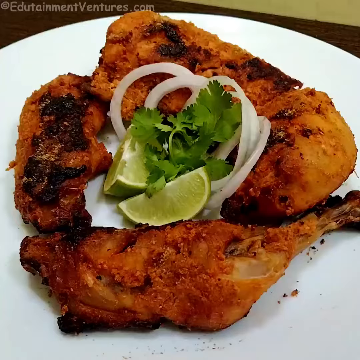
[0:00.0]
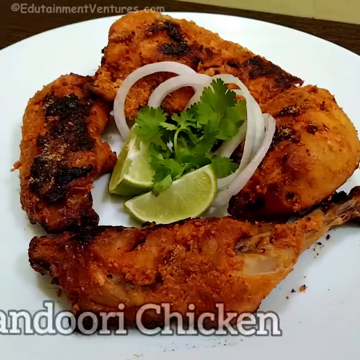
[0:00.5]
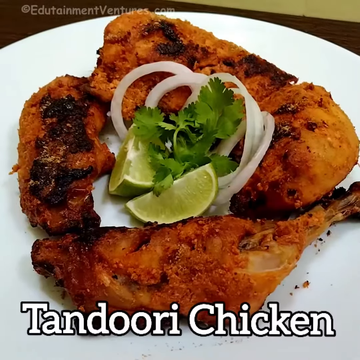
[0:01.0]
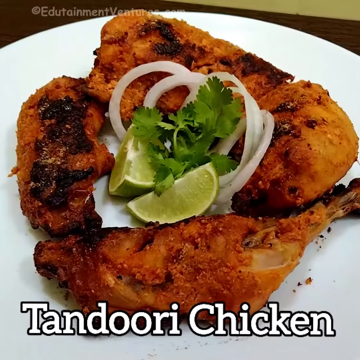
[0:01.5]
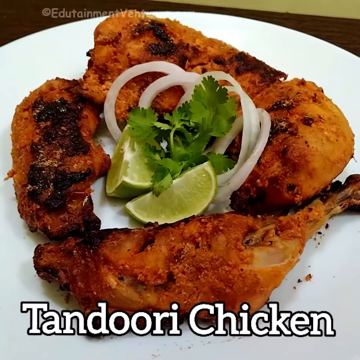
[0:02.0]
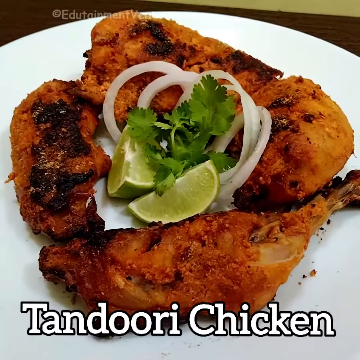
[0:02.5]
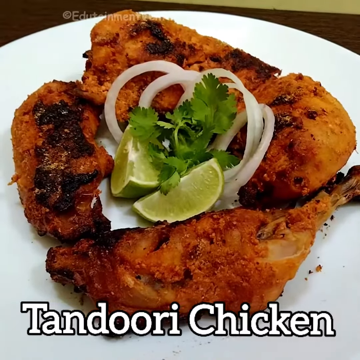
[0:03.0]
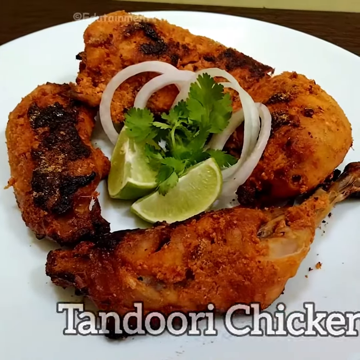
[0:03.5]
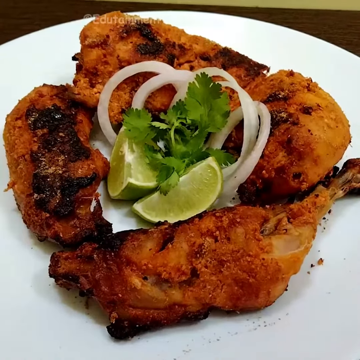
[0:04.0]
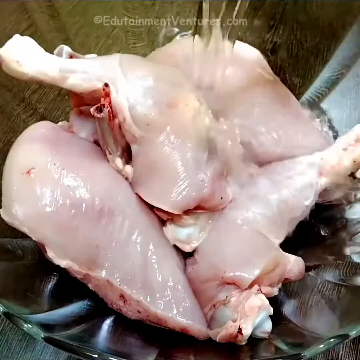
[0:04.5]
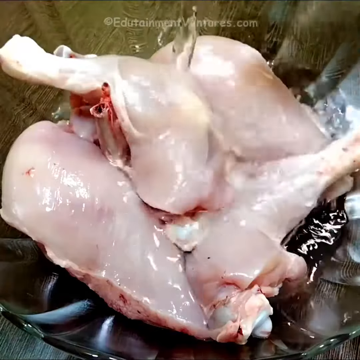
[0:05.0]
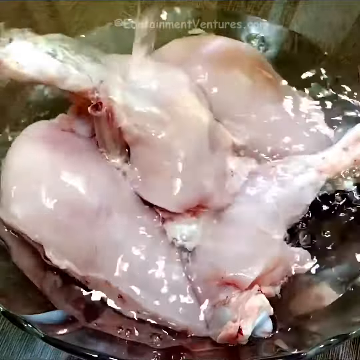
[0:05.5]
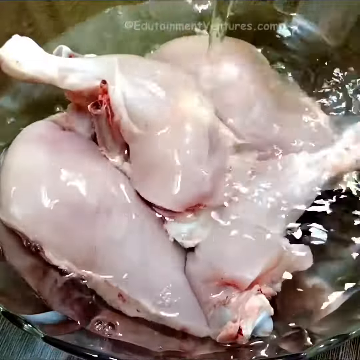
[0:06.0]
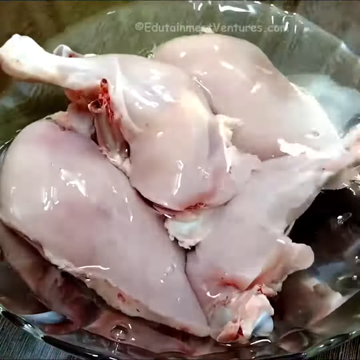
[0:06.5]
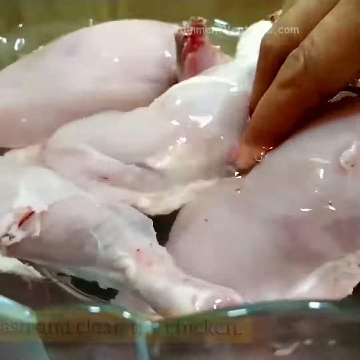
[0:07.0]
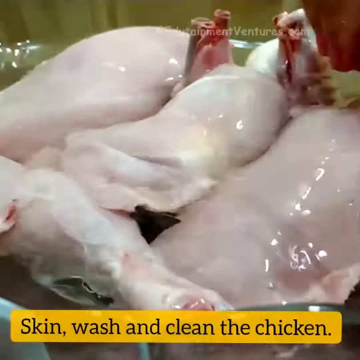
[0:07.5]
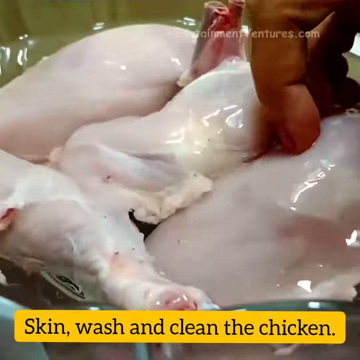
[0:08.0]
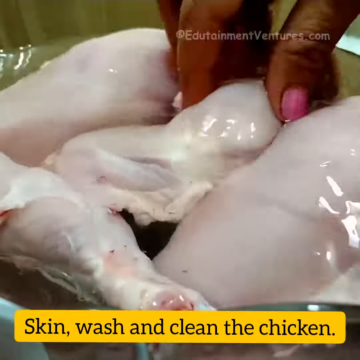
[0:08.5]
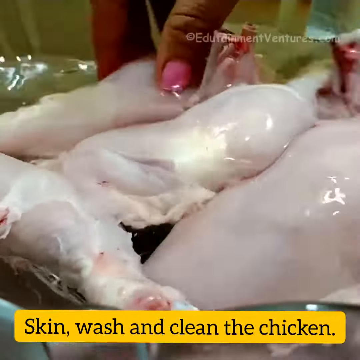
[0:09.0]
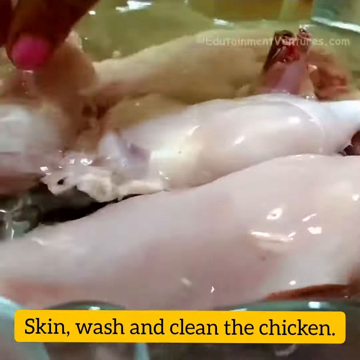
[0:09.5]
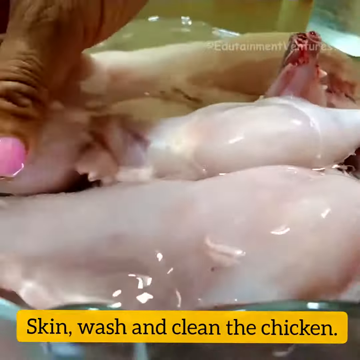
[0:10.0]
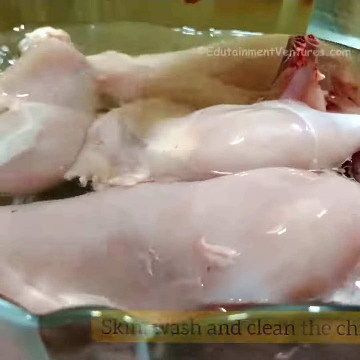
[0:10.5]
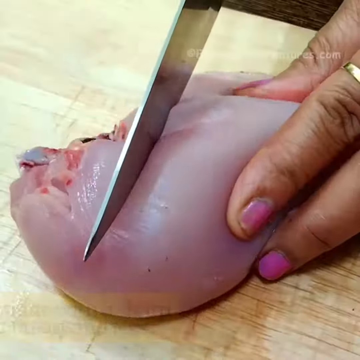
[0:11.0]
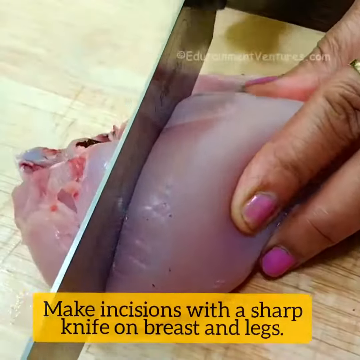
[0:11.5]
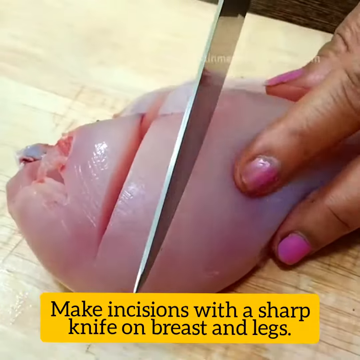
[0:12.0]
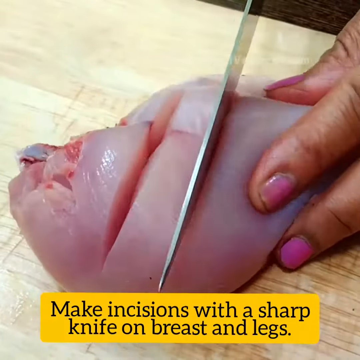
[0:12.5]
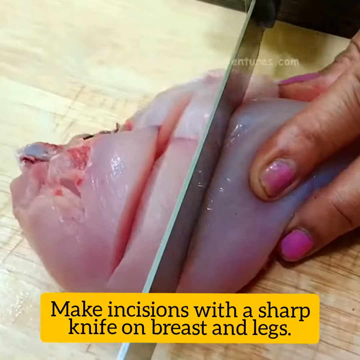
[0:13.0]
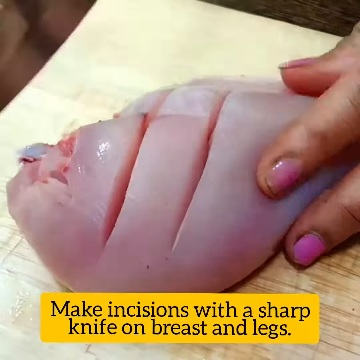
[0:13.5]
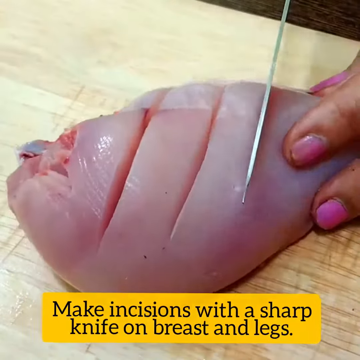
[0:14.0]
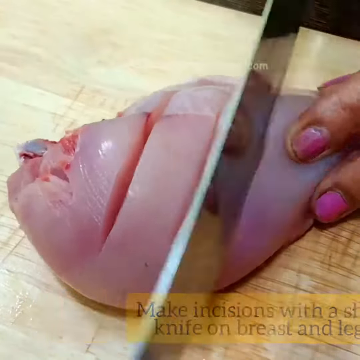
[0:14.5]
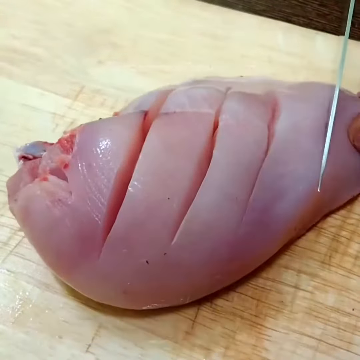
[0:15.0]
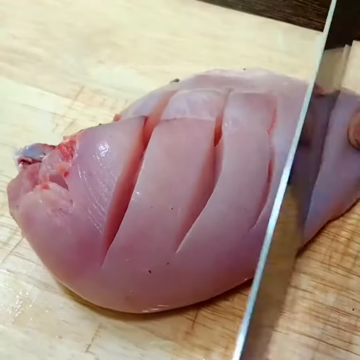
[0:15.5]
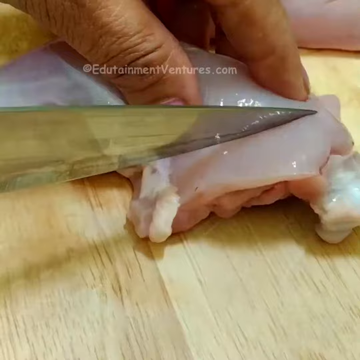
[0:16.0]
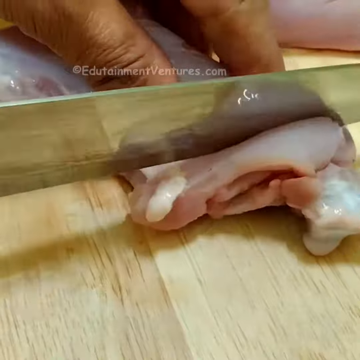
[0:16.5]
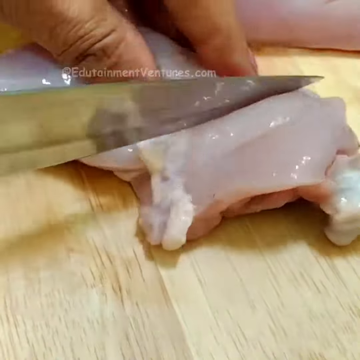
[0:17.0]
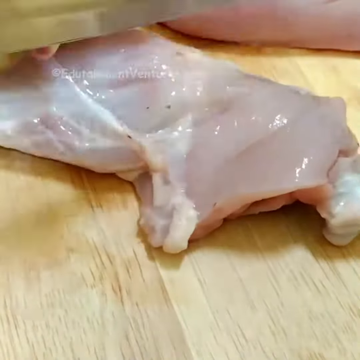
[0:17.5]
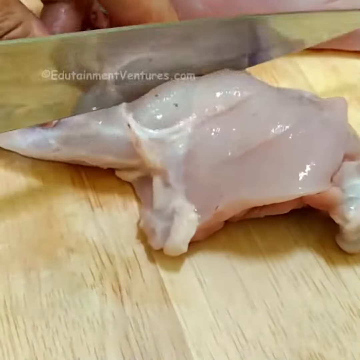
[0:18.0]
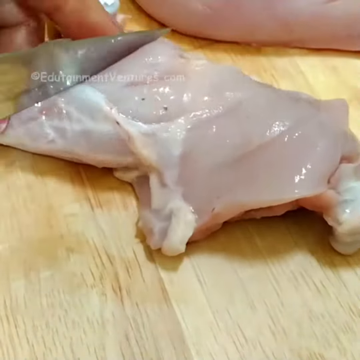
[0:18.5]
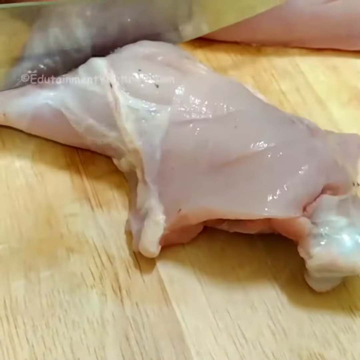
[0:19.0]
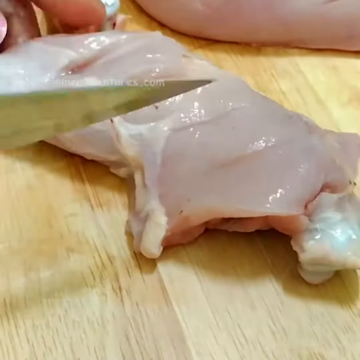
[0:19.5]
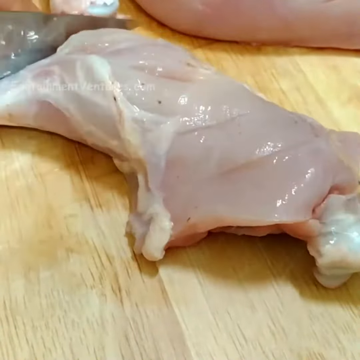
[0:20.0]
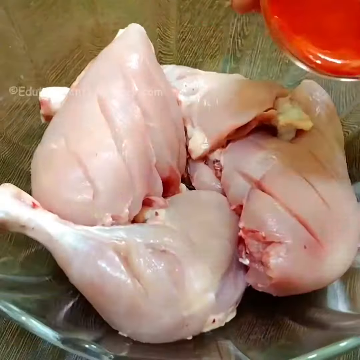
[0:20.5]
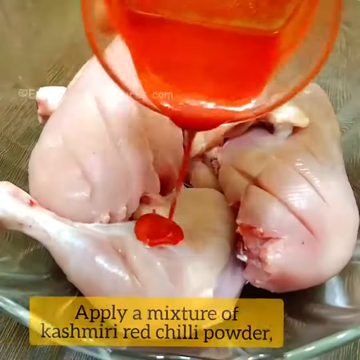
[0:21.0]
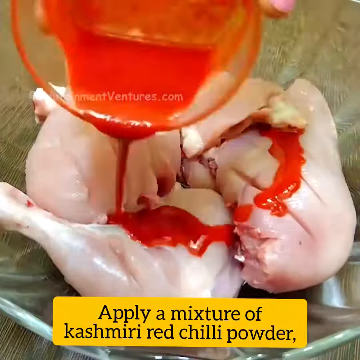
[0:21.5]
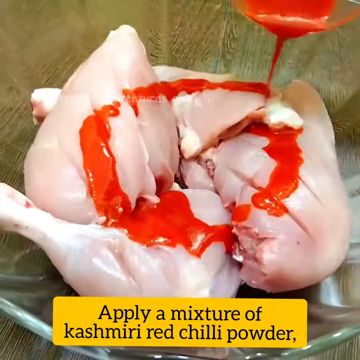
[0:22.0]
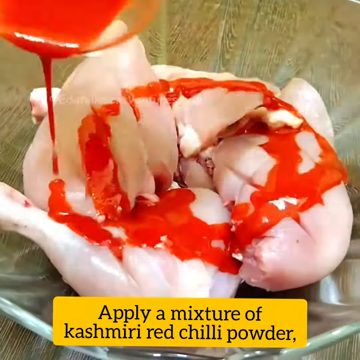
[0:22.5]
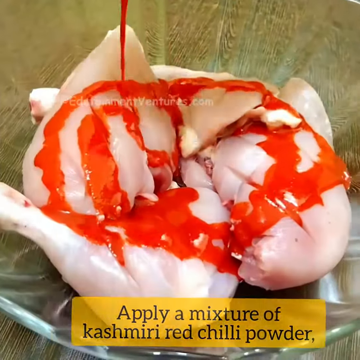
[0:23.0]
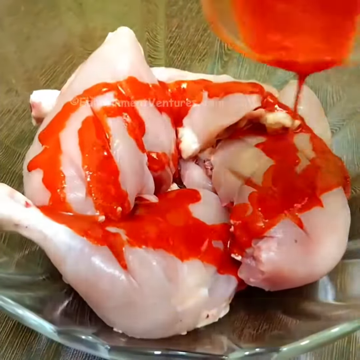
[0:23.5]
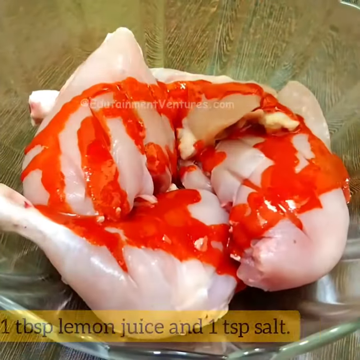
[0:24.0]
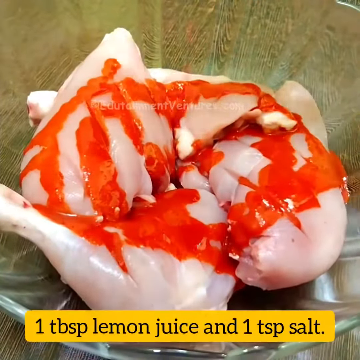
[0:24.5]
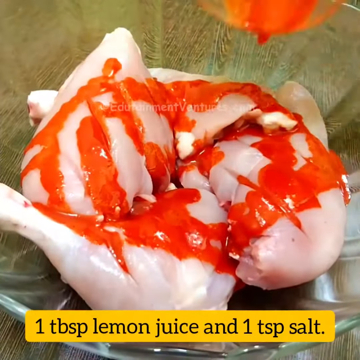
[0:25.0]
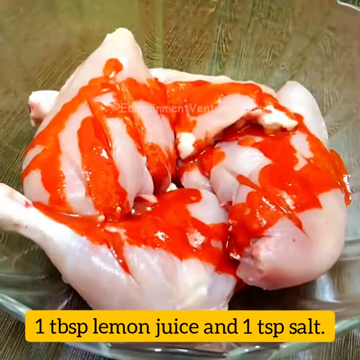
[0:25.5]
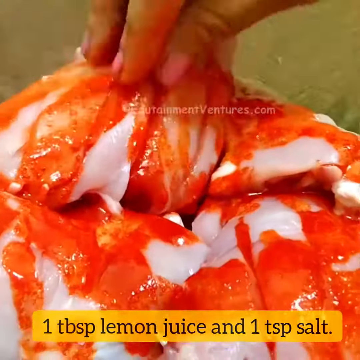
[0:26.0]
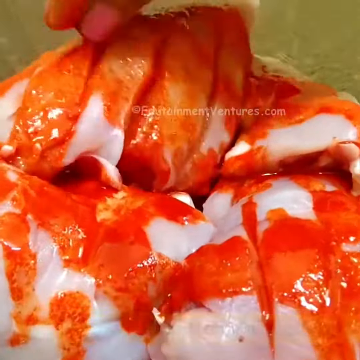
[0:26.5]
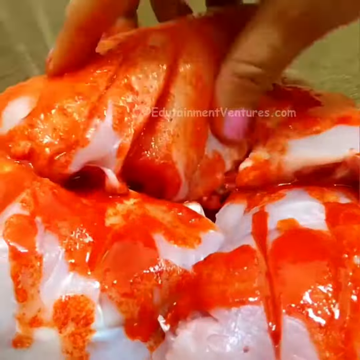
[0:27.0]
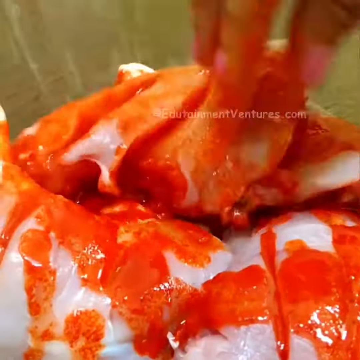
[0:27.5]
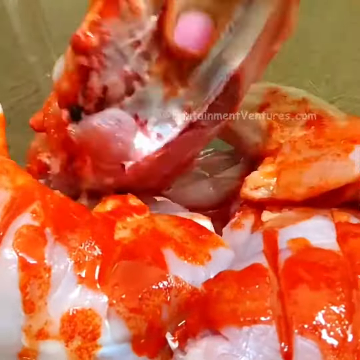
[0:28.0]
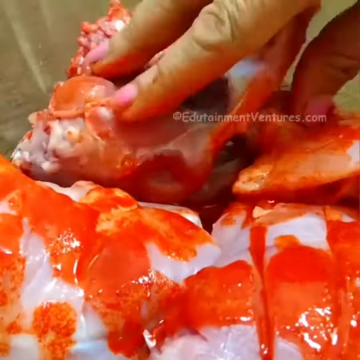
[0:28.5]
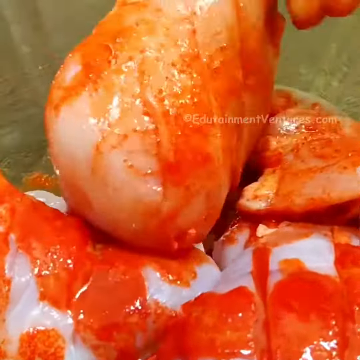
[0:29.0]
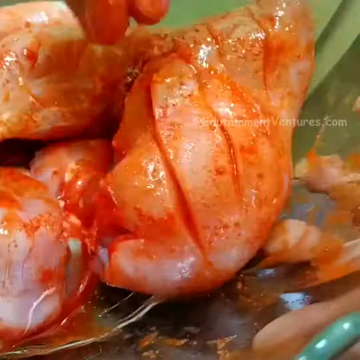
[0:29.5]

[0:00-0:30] A recipe video demonstrates how to make tandoori chicken, step by step, with the ingredients captioned at the bottom of the screen. It begins with the initial preparation of the chicken: the chicken is washed and then small incisions are made in it. Flavorings are then added to the chicken and rubbed in until the chicken is fully covered. The text at the bottom of the screen notes that it is a red Kashmiri flavoring. There are multiple chicken pieces. At the end, the finished result appears: three pieces of chicken arranged in a circle on a plate, with garnish in the middle of the circle, namely lime, what is possibly onion, and maybe cilantro or coriander. The chicken is already cooked and has scorch marks or darkened marks, suggesting it has been grilled or shallow fried. There also appears to be a coating on the chicken other than the spices. Parts of the steps are missing from the video.